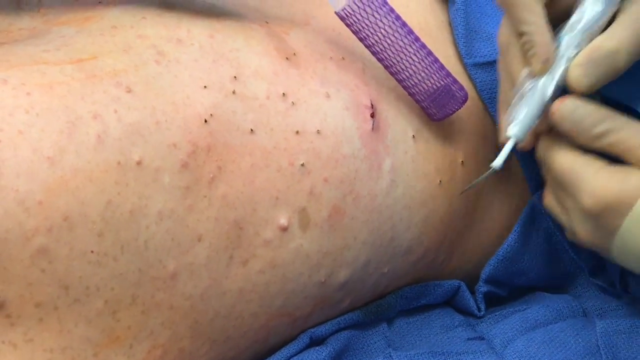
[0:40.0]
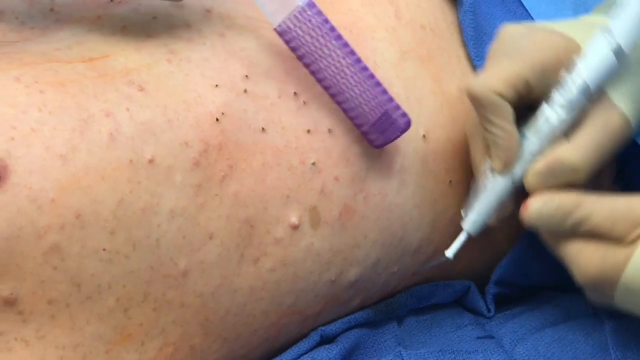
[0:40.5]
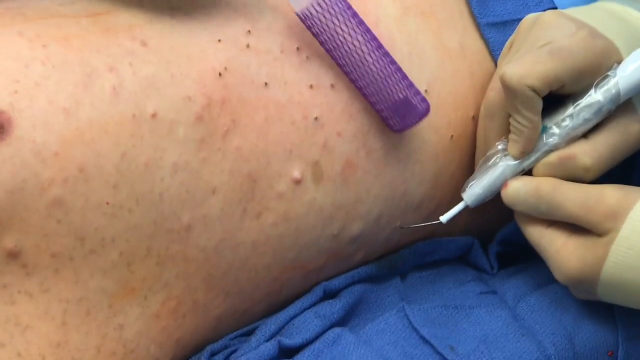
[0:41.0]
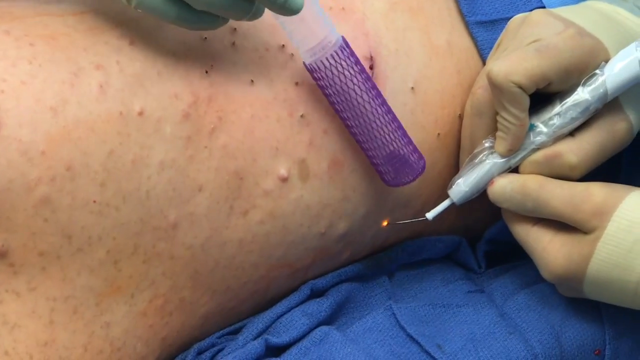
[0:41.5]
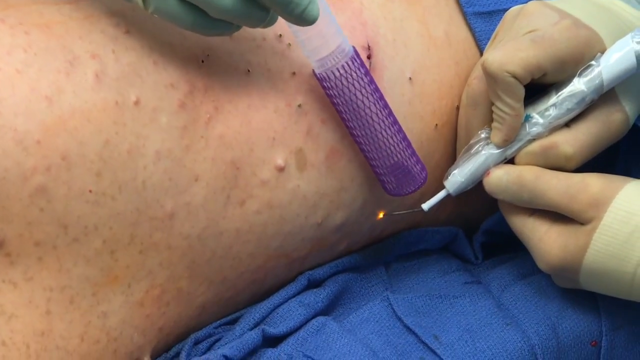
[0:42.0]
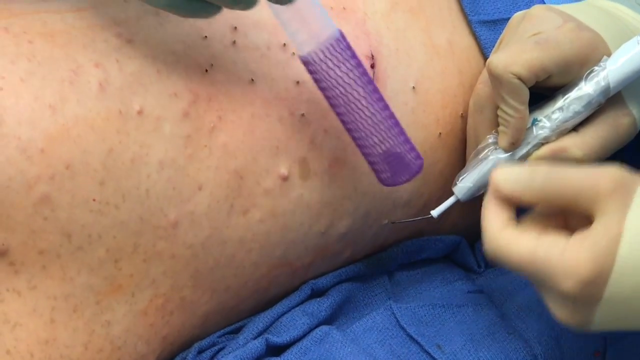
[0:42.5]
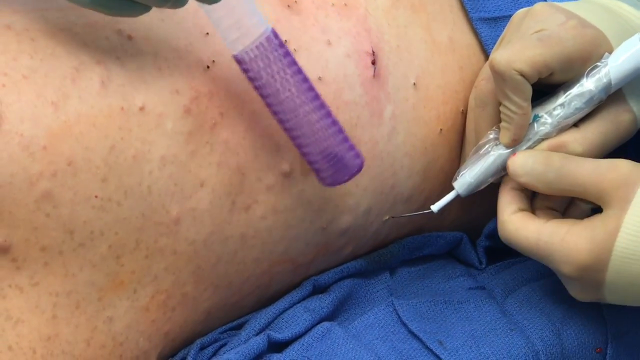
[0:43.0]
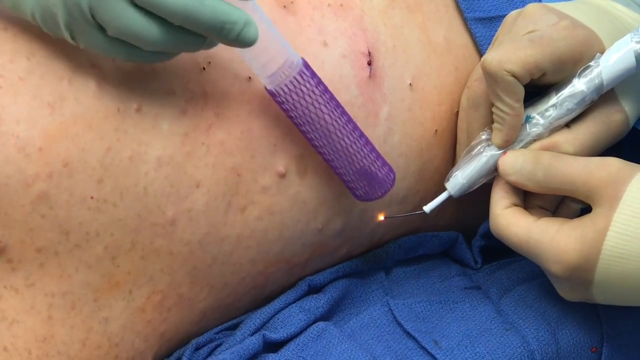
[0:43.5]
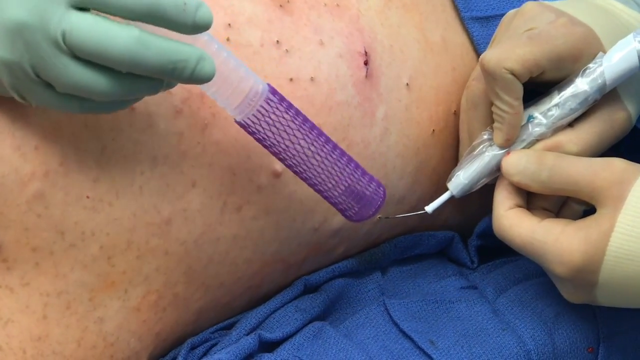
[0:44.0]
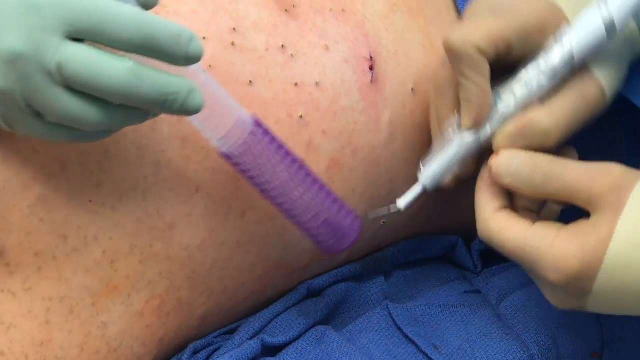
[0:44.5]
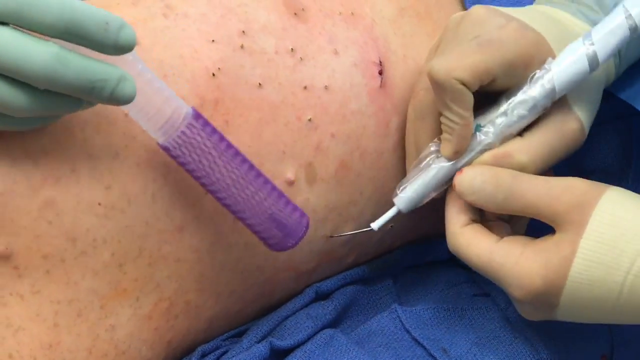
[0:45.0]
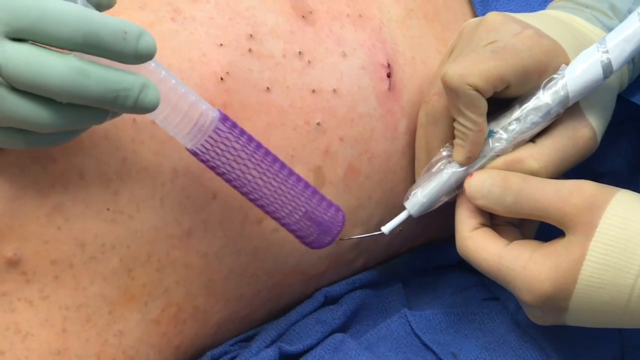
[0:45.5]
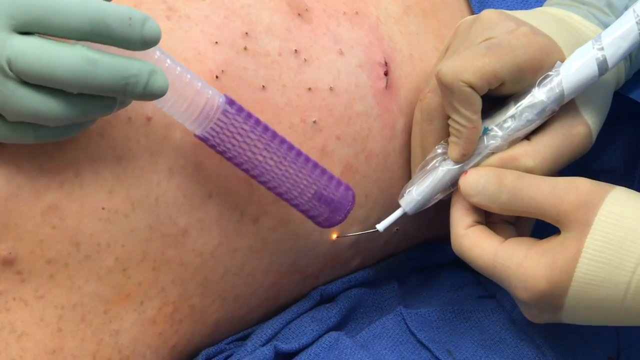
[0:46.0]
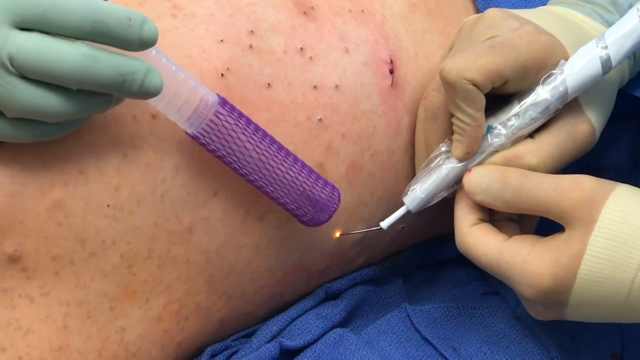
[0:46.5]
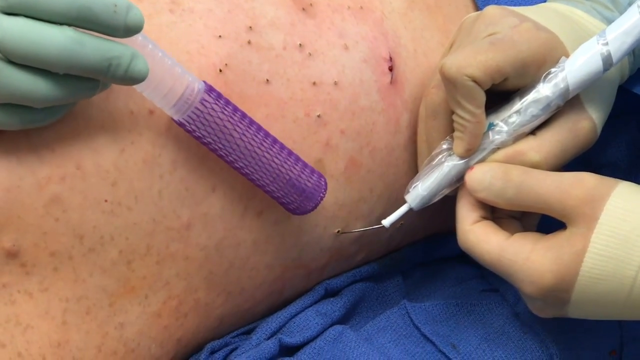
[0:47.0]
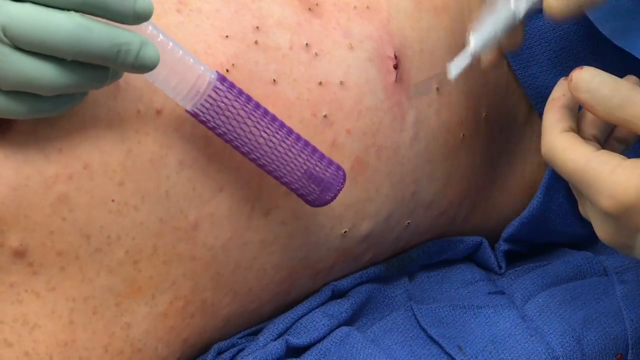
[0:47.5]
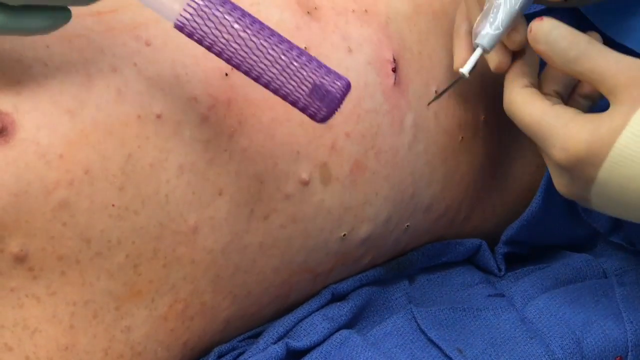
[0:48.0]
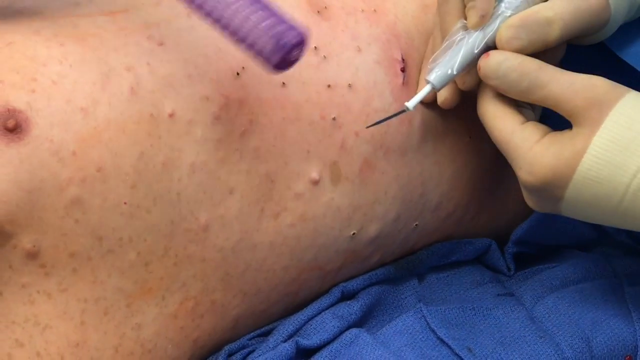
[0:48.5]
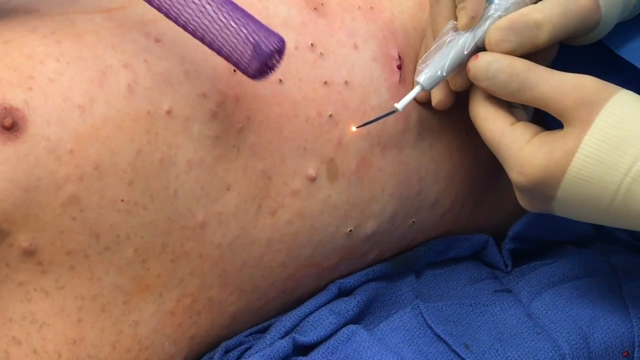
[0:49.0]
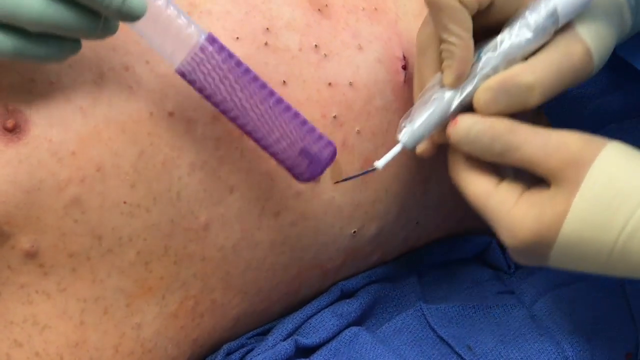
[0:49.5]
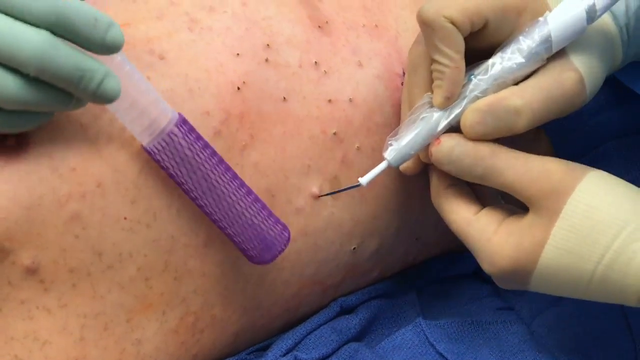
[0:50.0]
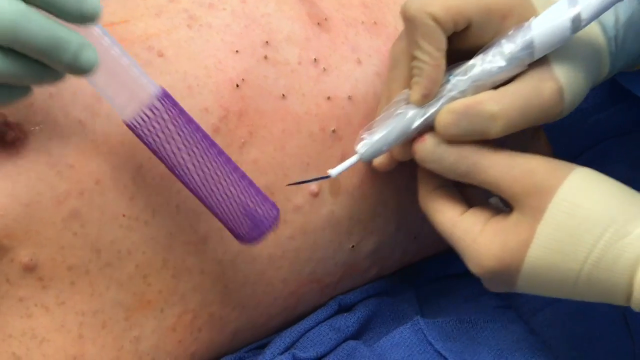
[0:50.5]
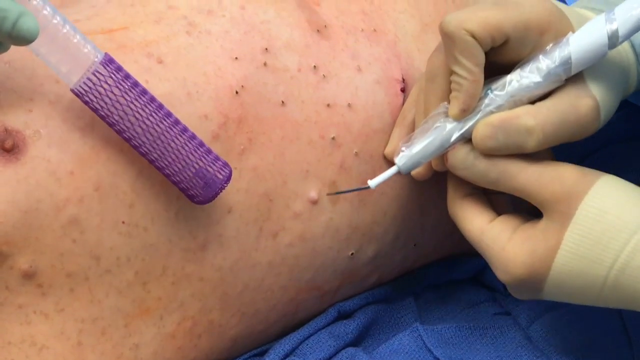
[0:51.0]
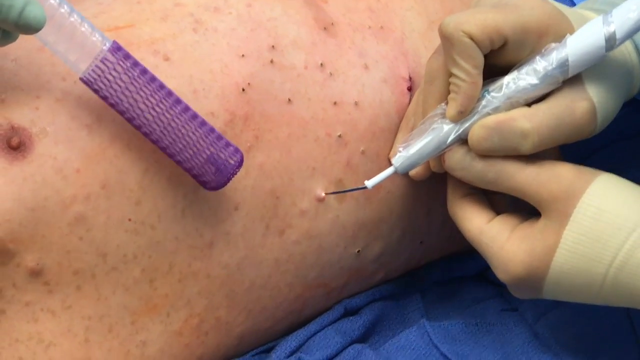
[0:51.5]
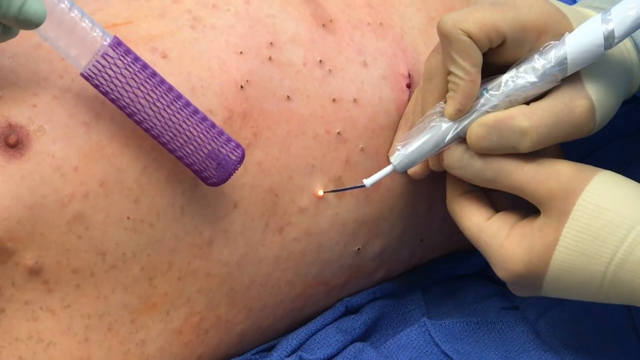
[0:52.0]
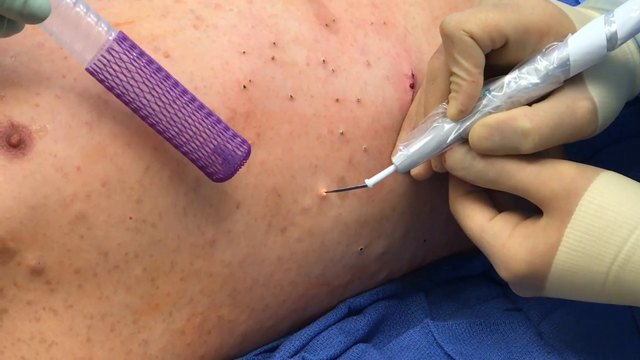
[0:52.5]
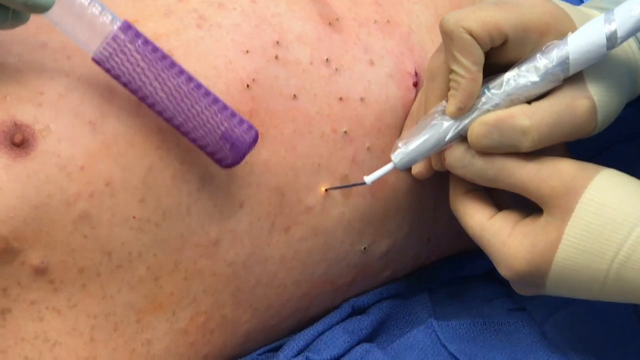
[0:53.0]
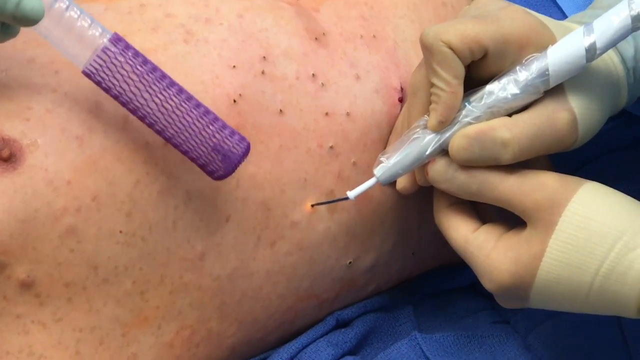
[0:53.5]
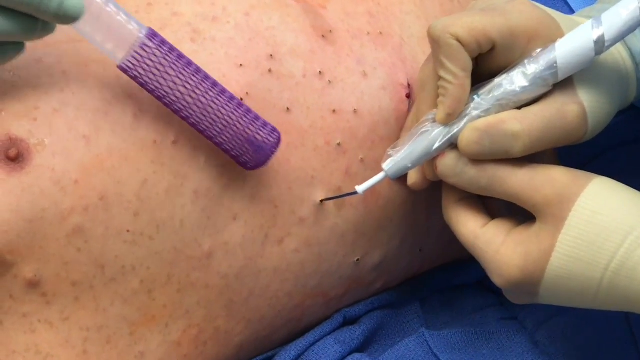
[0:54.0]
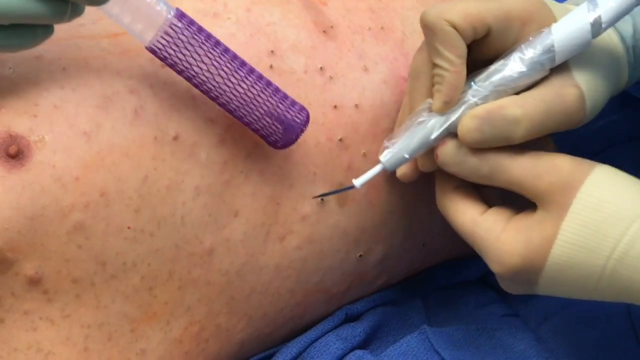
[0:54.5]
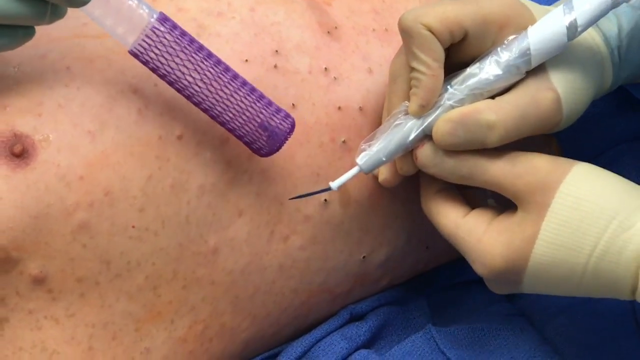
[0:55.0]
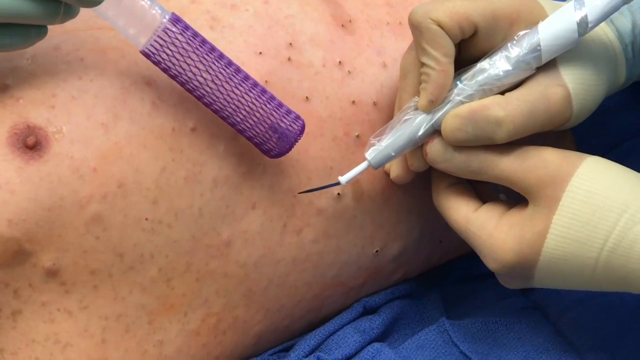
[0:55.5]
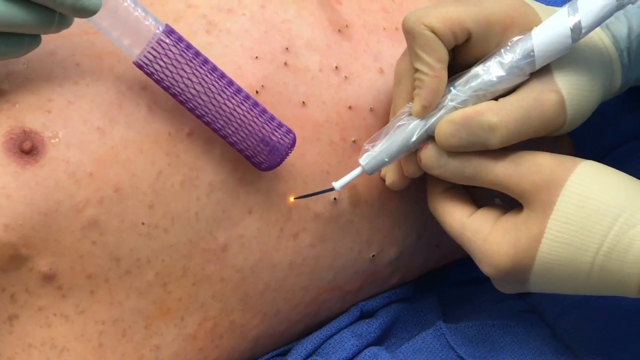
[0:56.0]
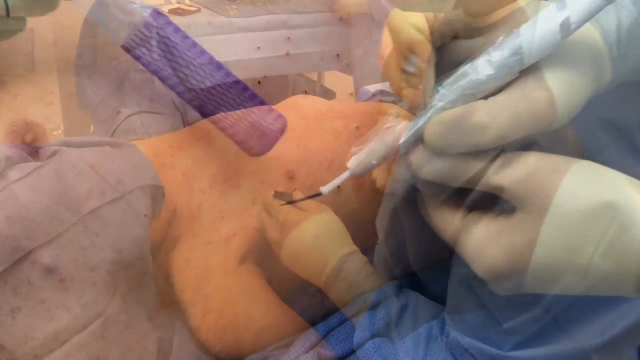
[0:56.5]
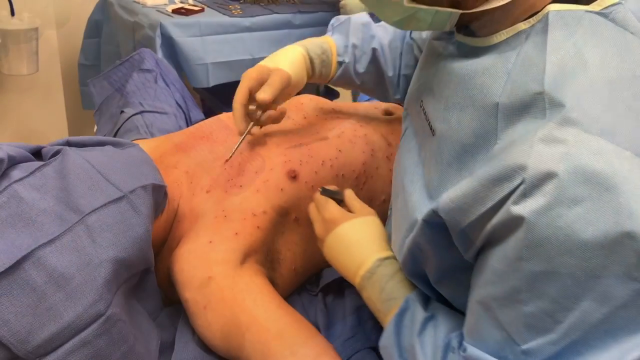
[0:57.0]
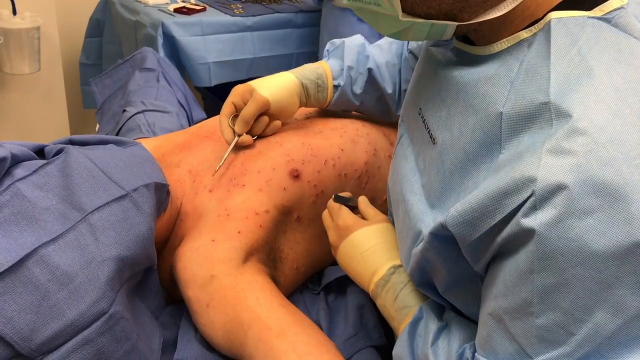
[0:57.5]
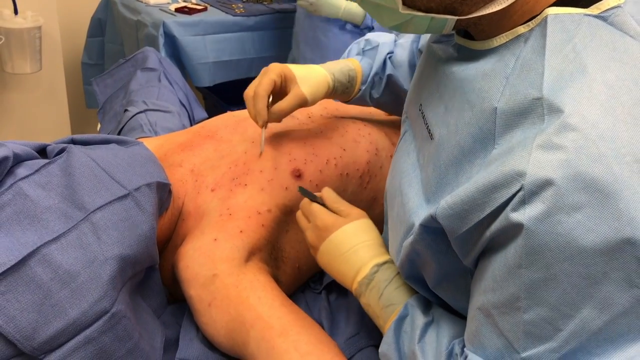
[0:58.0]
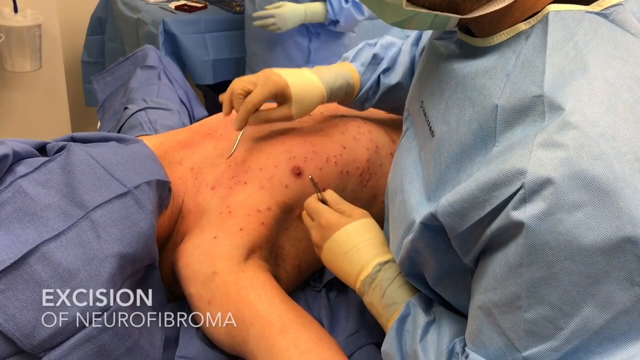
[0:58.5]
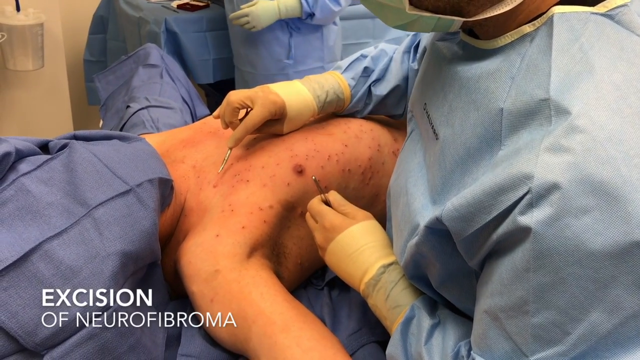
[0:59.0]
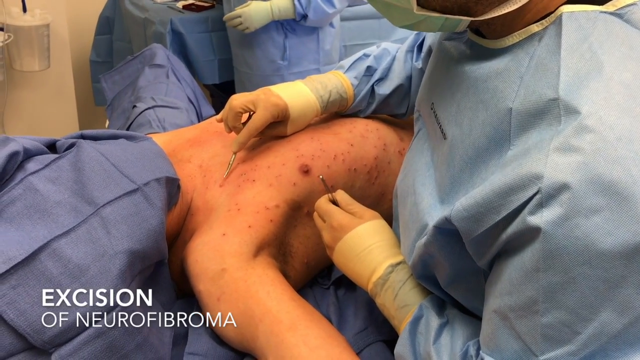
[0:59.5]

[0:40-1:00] The doctor and assistant move down the patient's right side toward the back. The patient lies on his back, and they work on the far side and upper chest of this Caucasian male patient. The doctor uses both hands to wield the laser to burn the neurofibromas, mainly the right hand; both hands are in white nitrile gloves. The assistant wears blue nitrile gloves, and the assistant's right hand is visible holding a ribbed, opaque white tube covered at the end with blue mesh, which appears to vacuum up dead skin cells or blow cold air onto the spots as the surgeon burns each one, leaving a tiny black dot where each neurofibroma has been burned. The patient's right arm is extended out. His face and lower body are covered with blue surgical sheets. The doctor's face is masked, and both the doctor and the assistant wear blue surgical gowns. In the background is a table with tools, also covered with blue surgical sheeting, and off-cream walls.